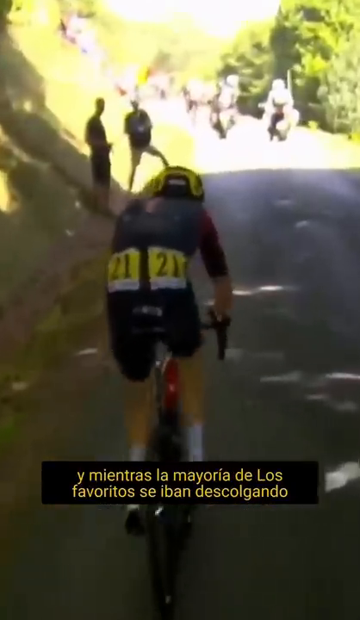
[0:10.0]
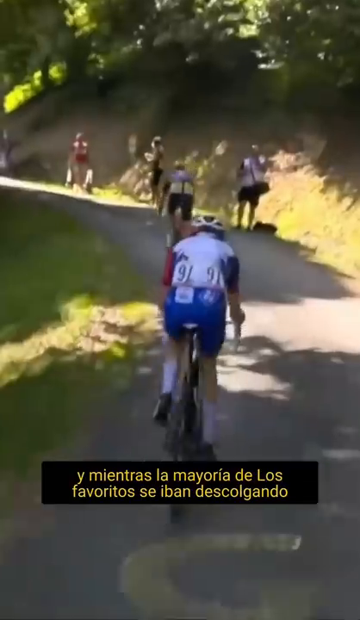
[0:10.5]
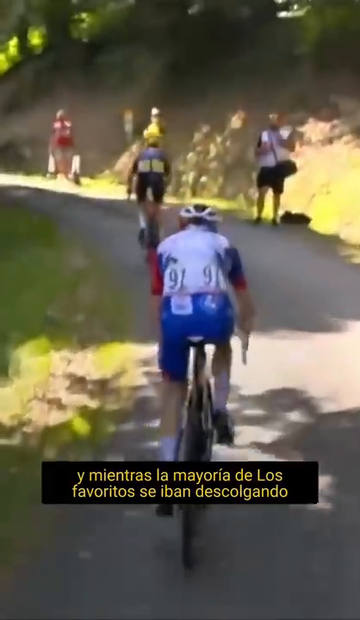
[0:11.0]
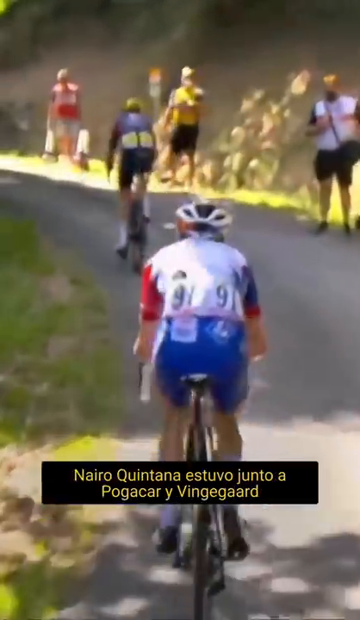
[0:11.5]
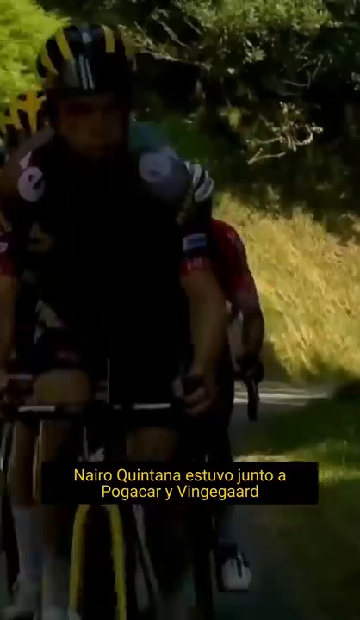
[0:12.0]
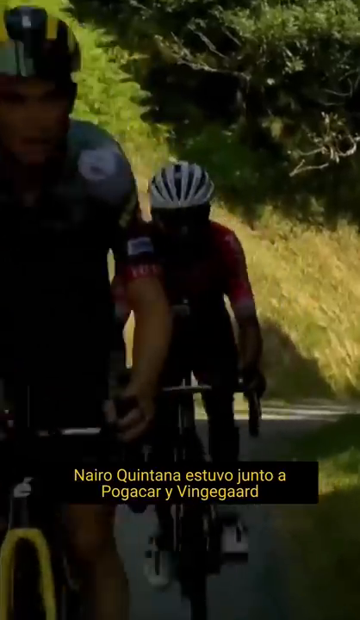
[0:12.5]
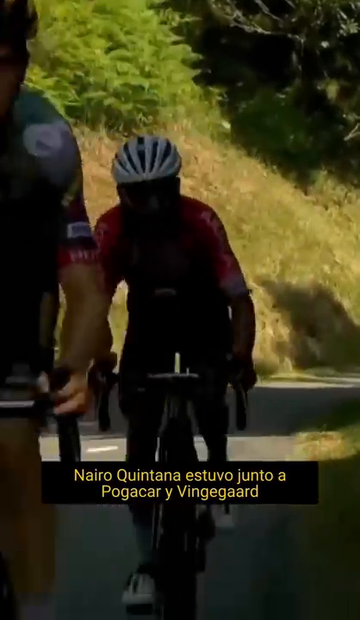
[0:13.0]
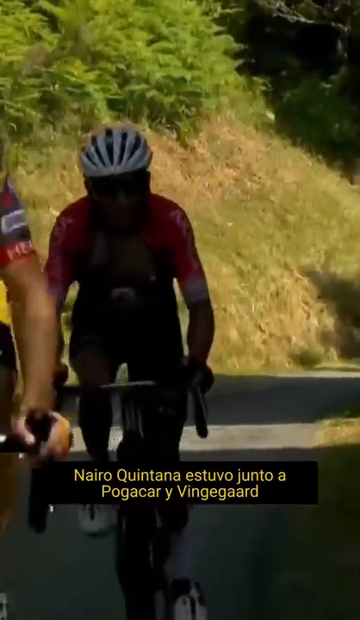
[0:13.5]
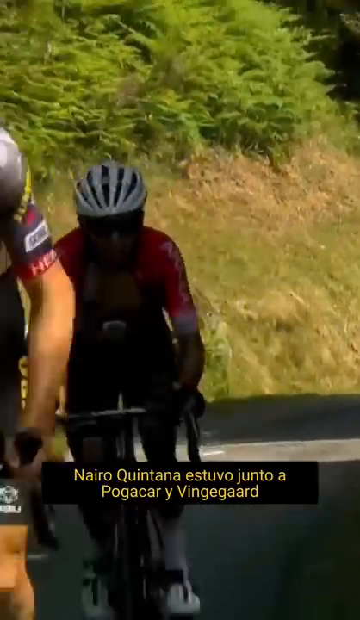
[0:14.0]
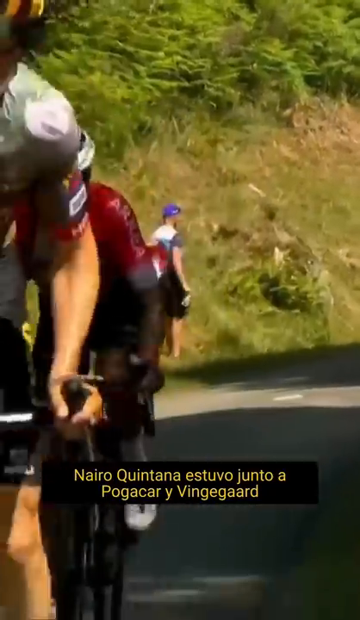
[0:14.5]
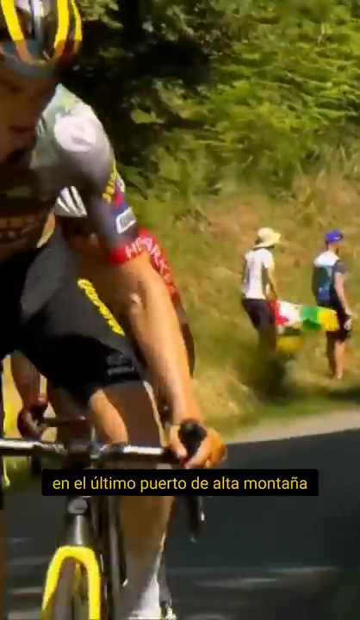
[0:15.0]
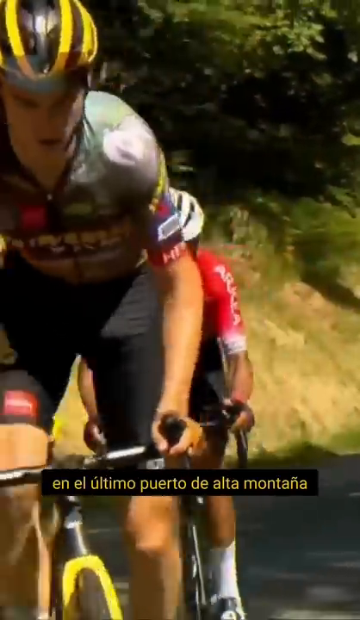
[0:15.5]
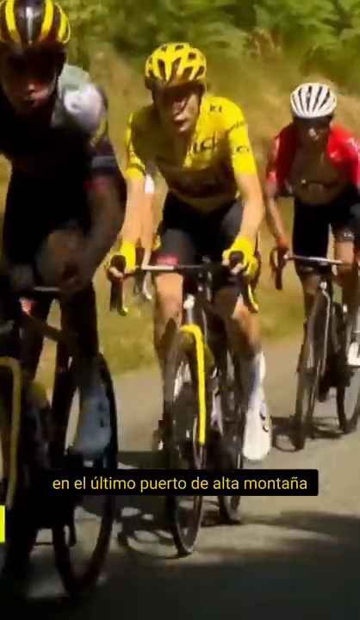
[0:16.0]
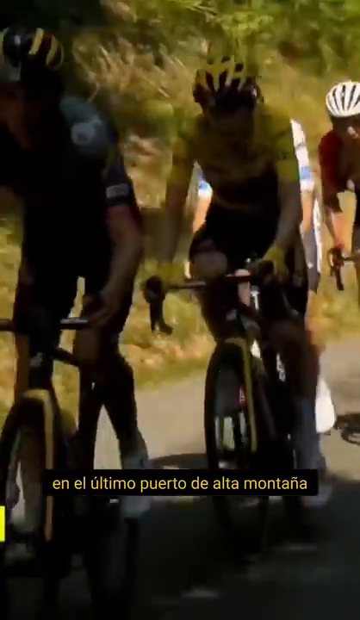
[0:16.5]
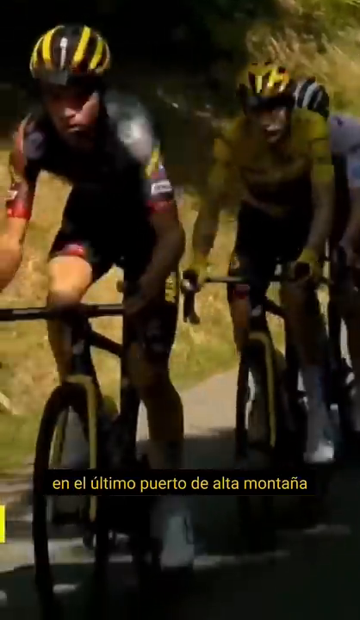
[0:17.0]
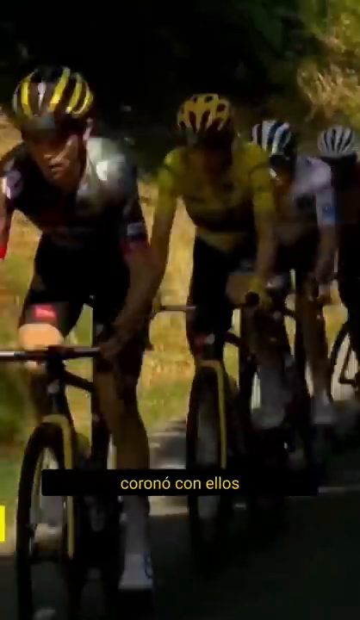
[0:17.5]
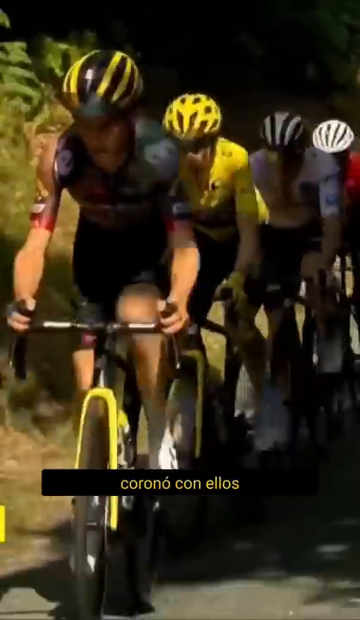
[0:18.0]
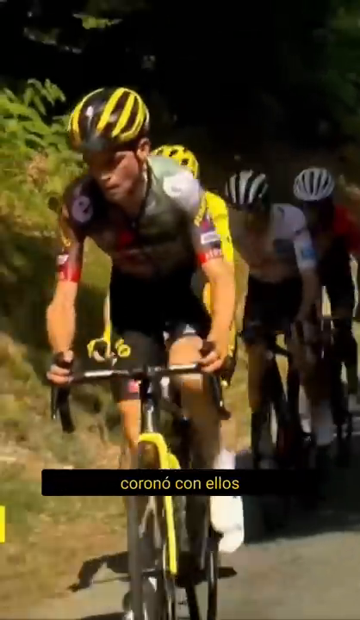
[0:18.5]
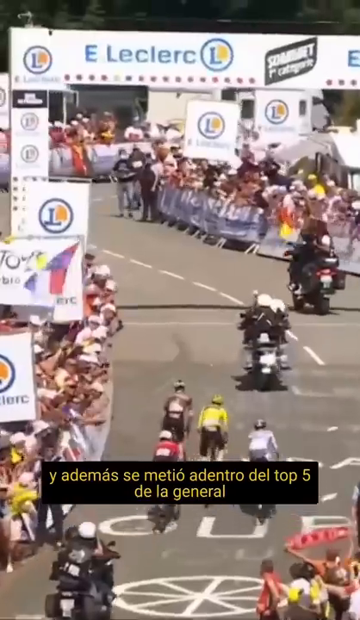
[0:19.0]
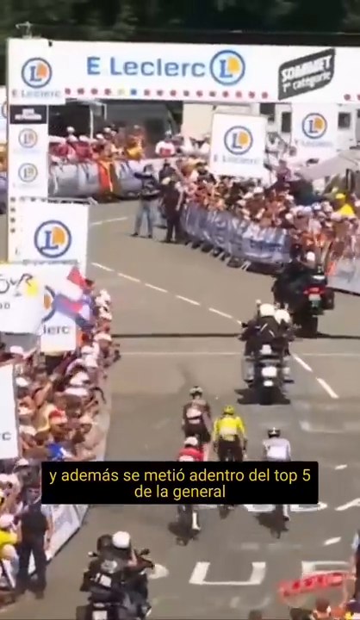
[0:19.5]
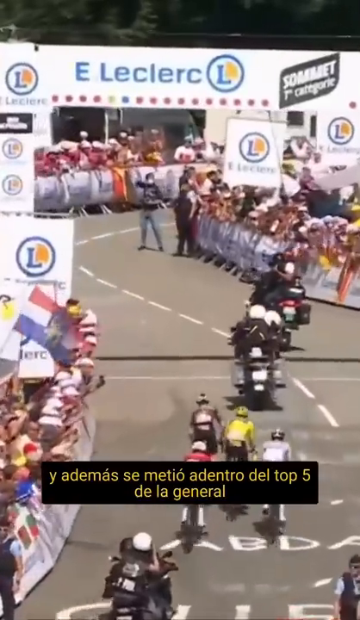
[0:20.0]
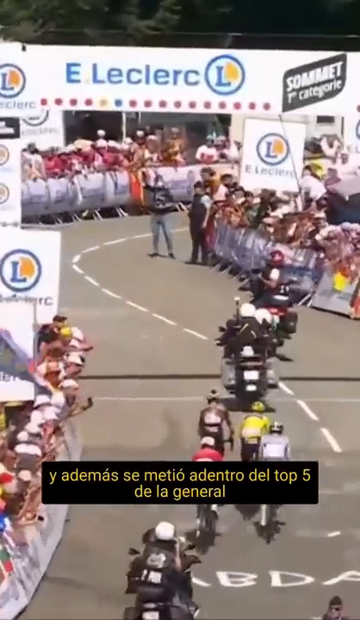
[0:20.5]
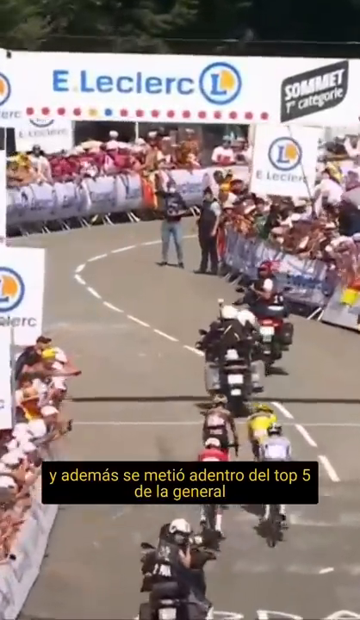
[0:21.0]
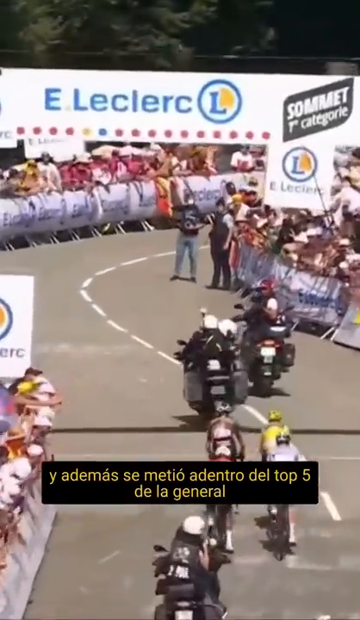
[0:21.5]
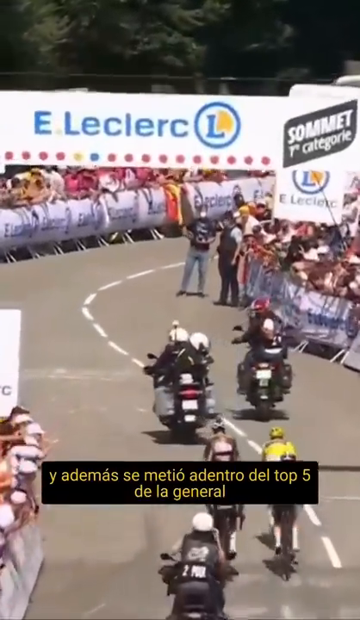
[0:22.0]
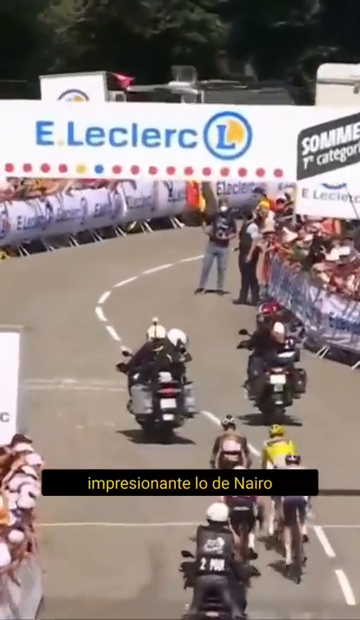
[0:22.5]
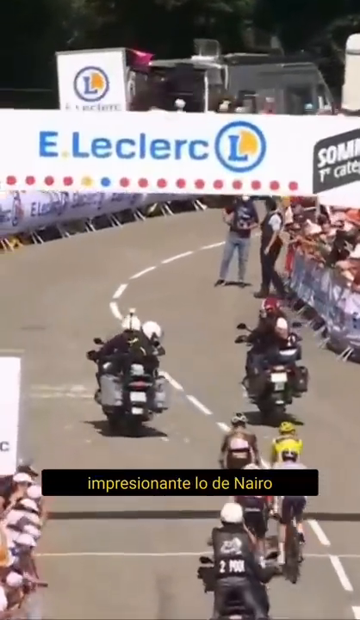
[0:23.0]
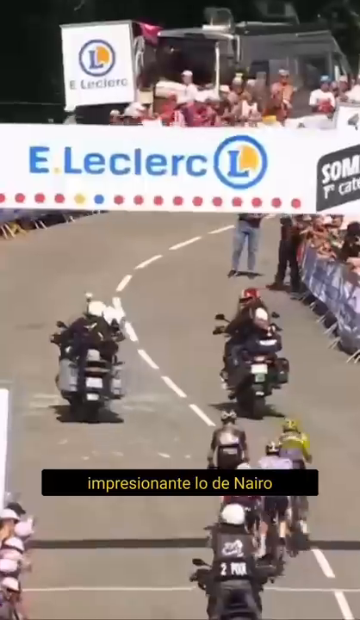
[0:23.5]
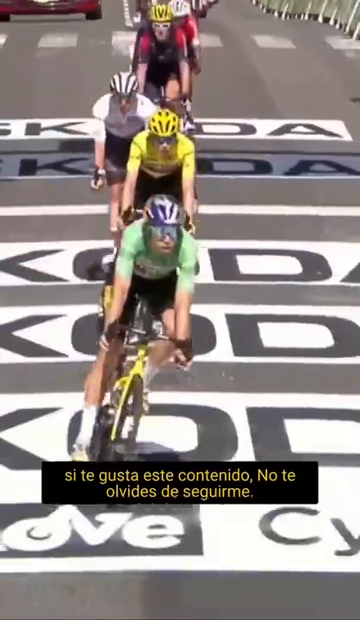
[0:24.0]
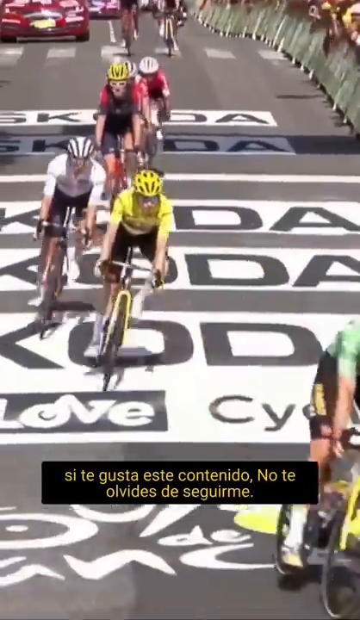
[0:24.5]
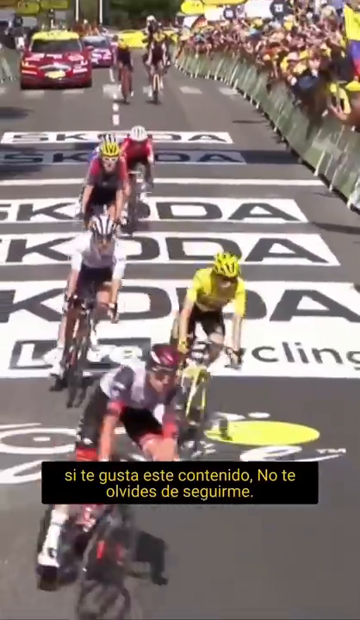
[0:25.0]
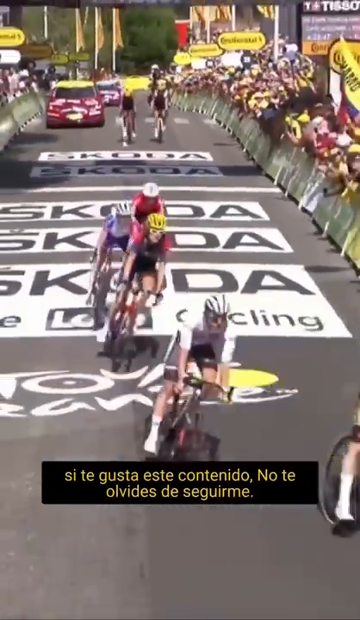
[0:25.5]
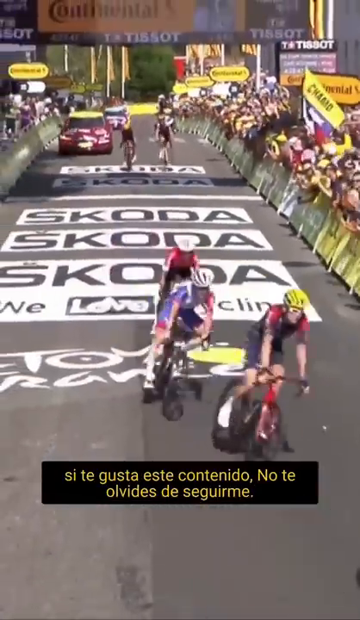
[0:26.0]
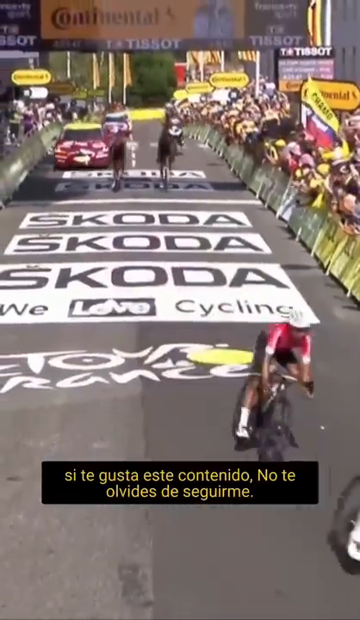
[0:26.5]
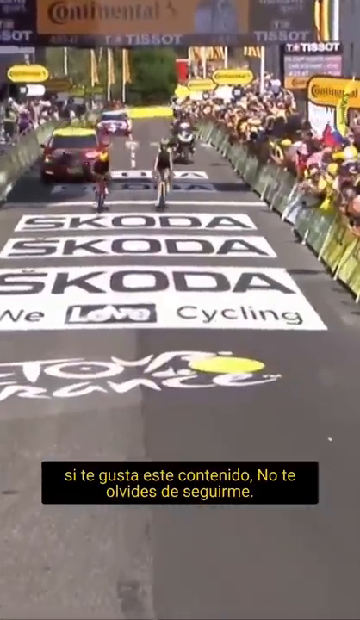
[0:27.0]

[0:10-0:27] The single rider continues racing, and another rider is seen behind him. The Spanish captions continue. The riders wear different bright outfits. In the next part of the race, a lot of people are watching, separated by a barrier and cheering. The bikers then go over different logos sketched on top of the concrete. In front of the race at the end are two motorcycles with a lot of storage on their sides; the man riding the bike on the right is leaned around, recording the bikers behind him. Different sports cars are in the back of the race, between the barriers of people, and look to be possibly sports cars that sponsor some of the bikers in the event.